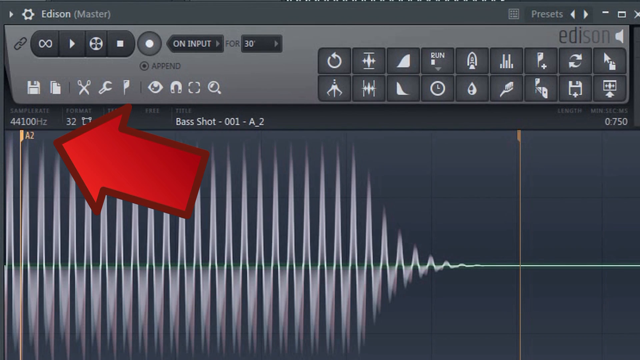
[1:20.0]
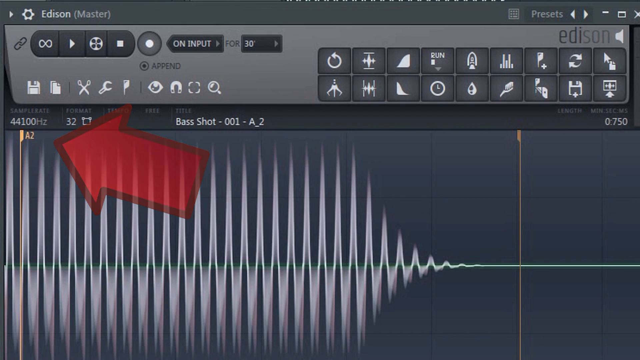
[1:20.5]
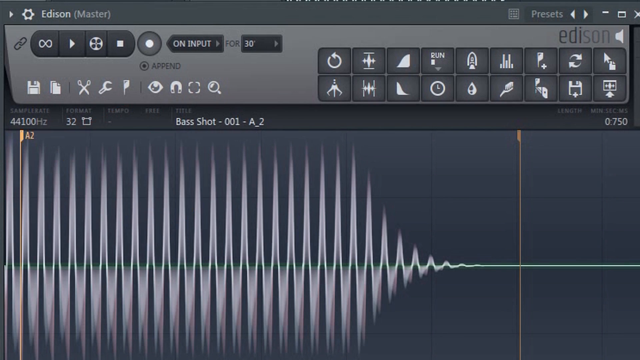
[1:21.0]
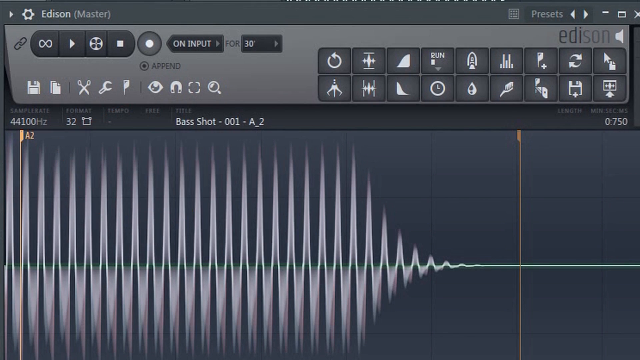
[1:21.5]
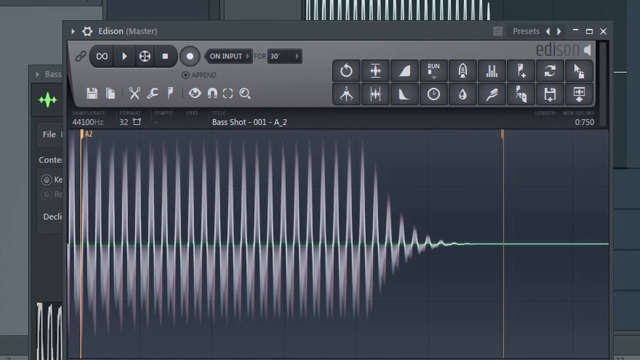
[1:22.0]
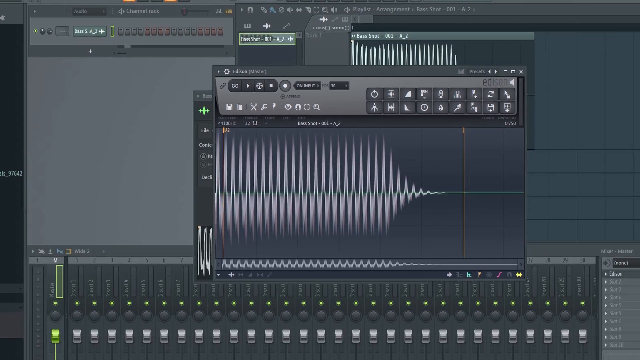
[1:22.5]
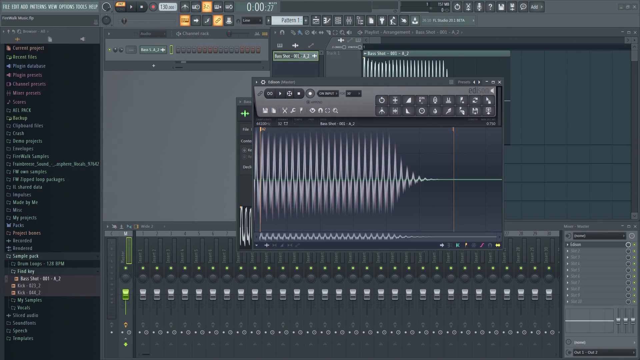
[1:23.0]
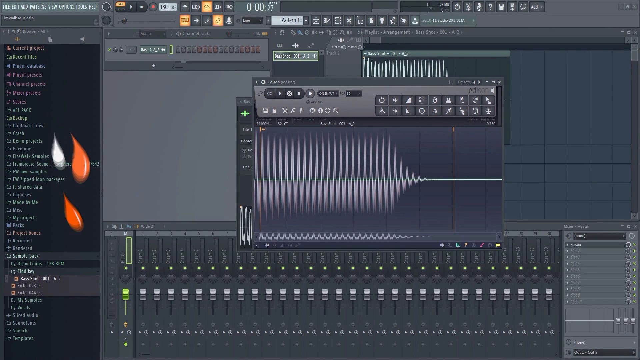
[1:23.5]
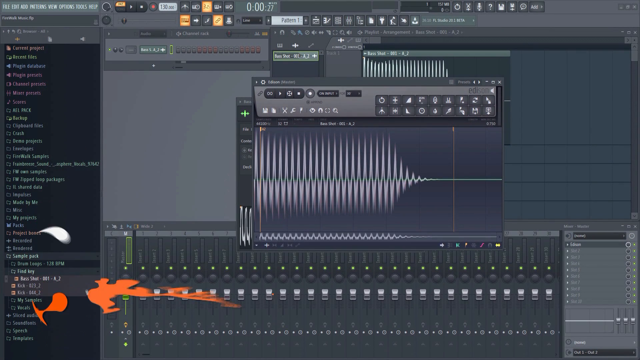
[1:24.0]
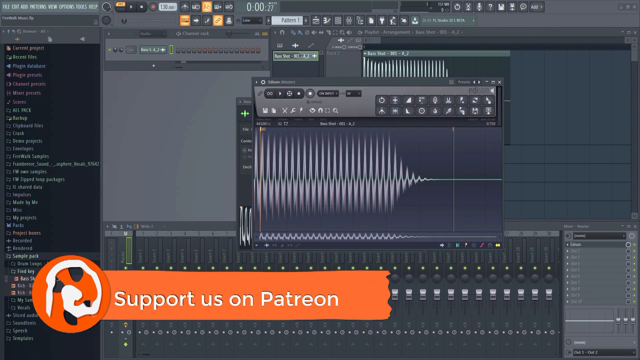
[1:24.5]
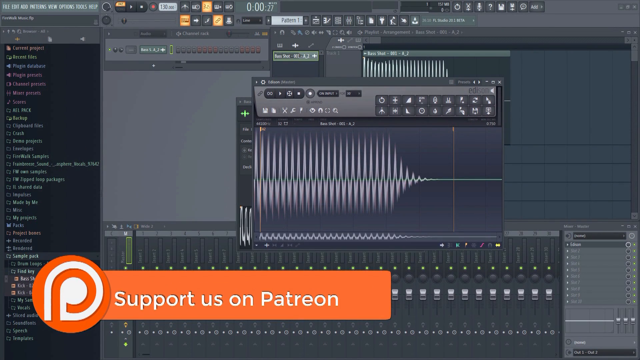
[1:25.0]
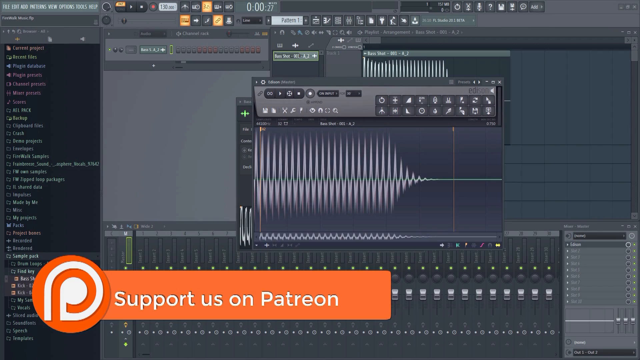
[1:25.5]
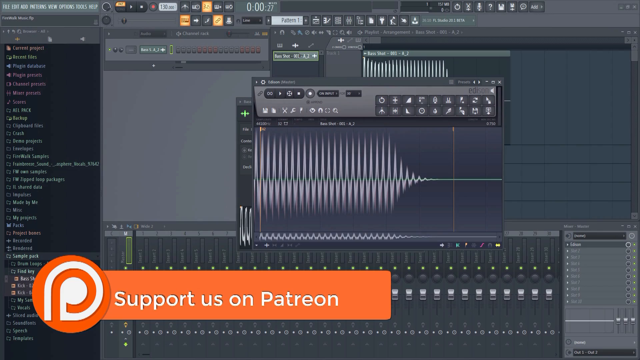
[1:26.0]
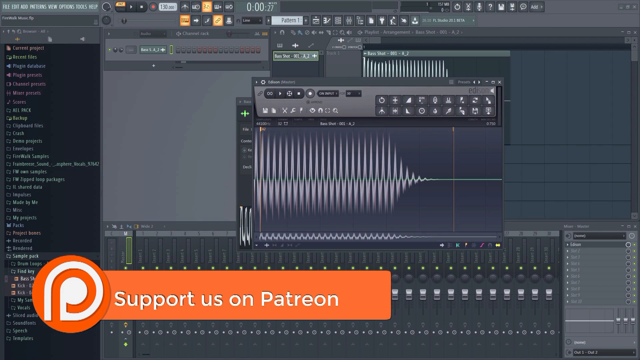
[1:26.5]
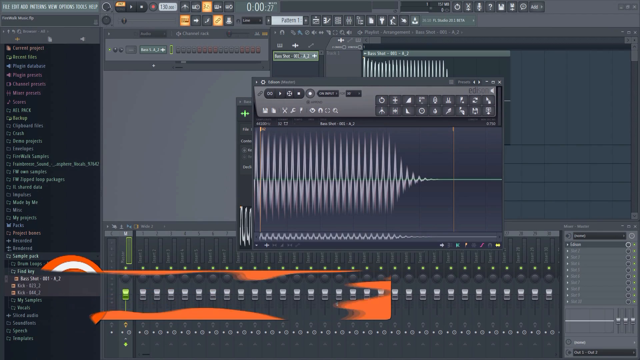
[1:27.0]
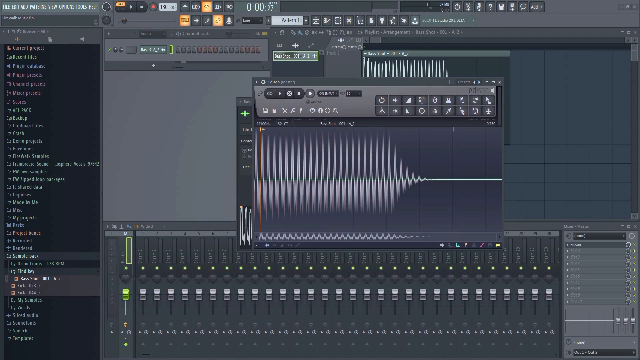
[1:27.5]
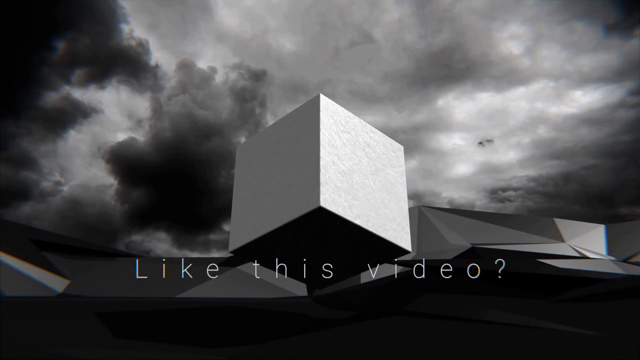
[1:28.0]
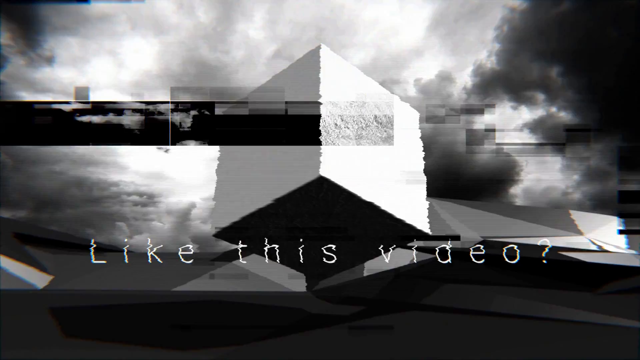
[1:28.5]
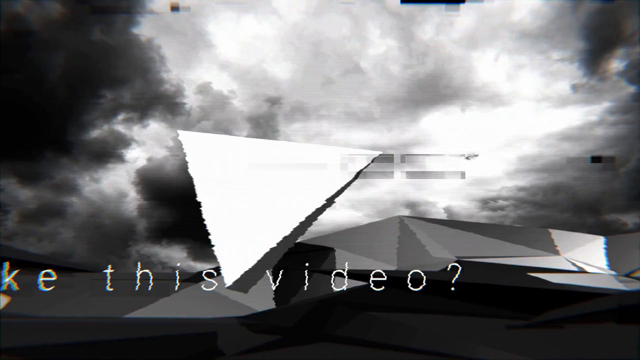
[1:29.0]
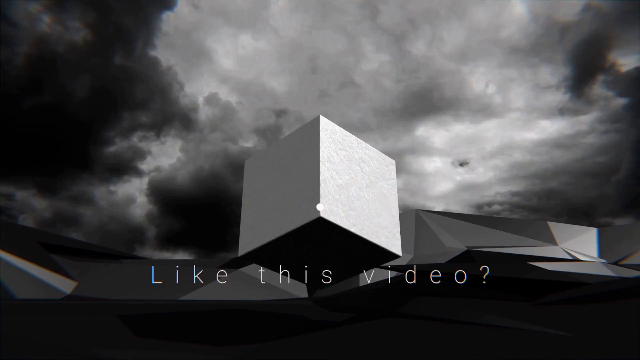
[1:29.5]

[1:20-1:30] A software program is shown with a waveform at the bottom of the screen. In the top left corner, white text reads "Edison Master" in parentheses, with a white gear-looking icon next to it and a little black chain-looking icon below. In the top right corner, gray text reads "presets," and below it, in two-tone color, "Edison." On the left side of the screen above the waveform is "44,100 hertz," with "Format 32" next to it. A title reads "Bass Shot" or "Bass Shot-001-A-2." A red arrow on the left side of the screen points at a peak in the waveform.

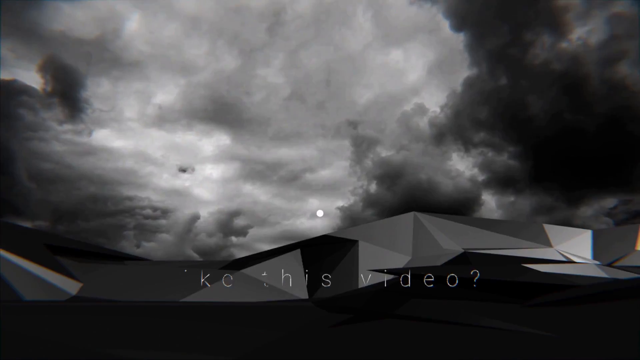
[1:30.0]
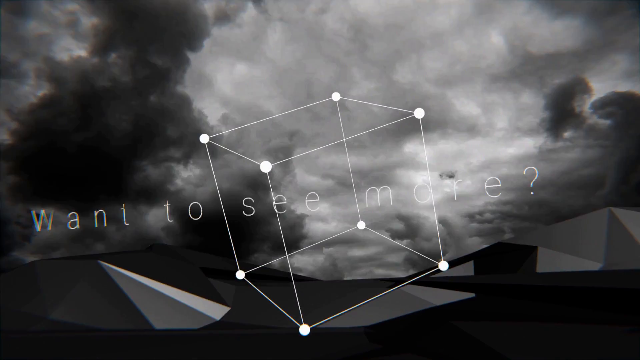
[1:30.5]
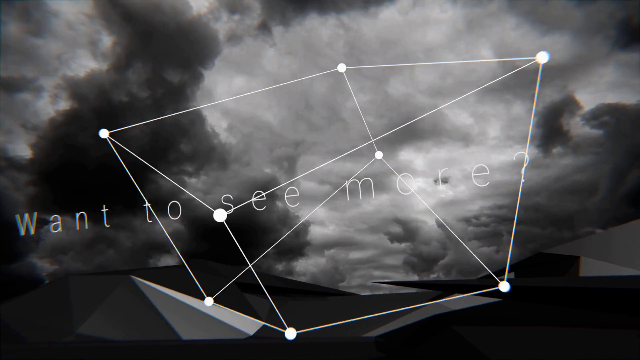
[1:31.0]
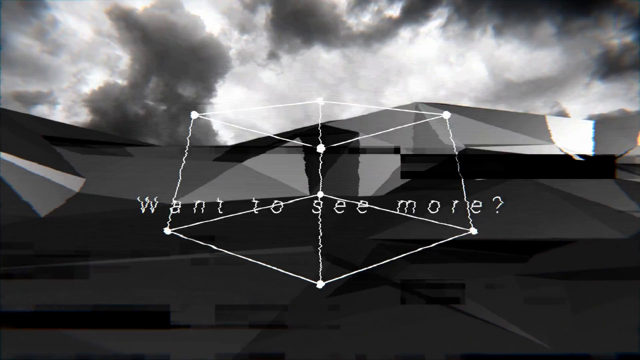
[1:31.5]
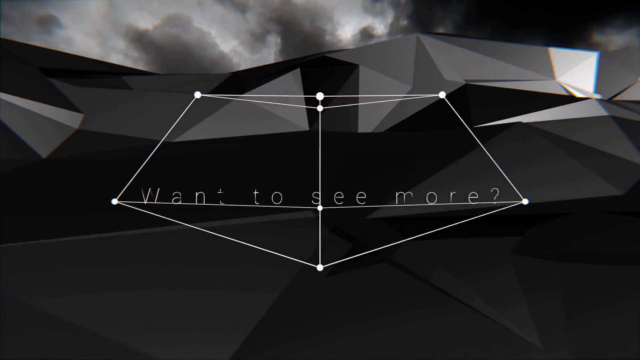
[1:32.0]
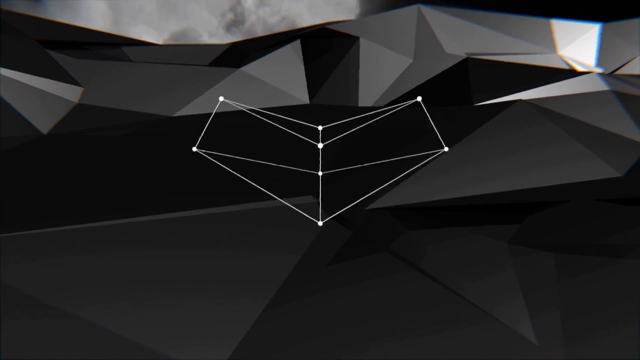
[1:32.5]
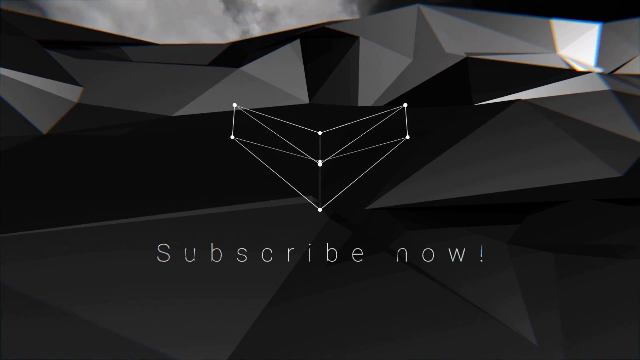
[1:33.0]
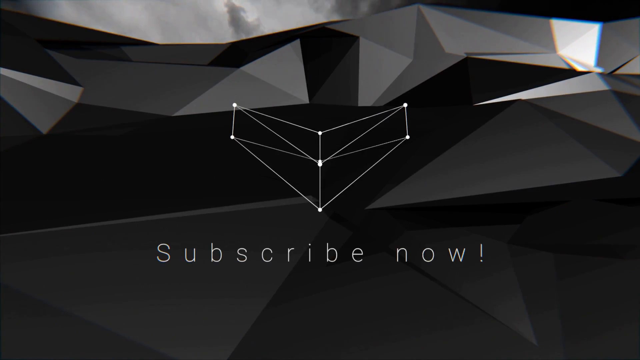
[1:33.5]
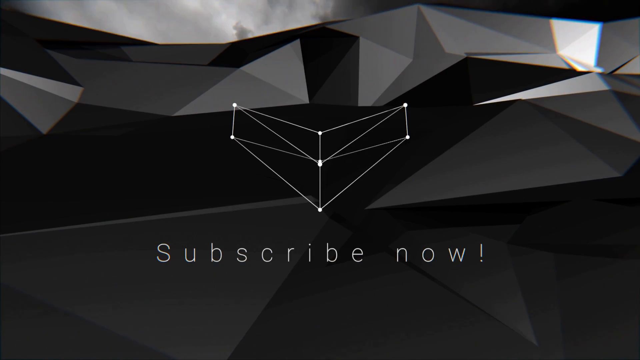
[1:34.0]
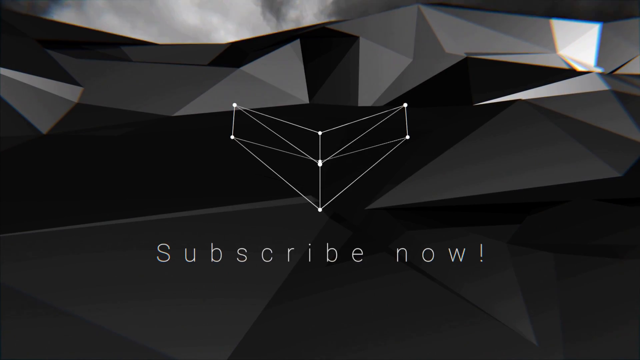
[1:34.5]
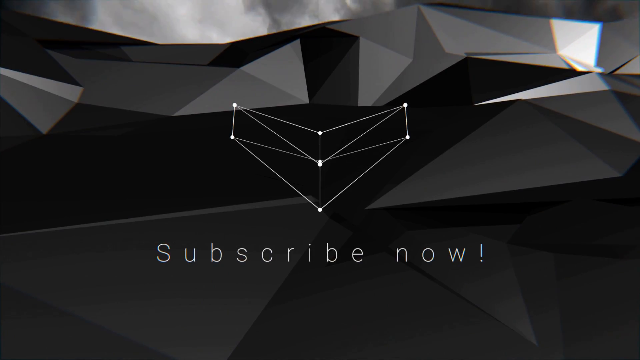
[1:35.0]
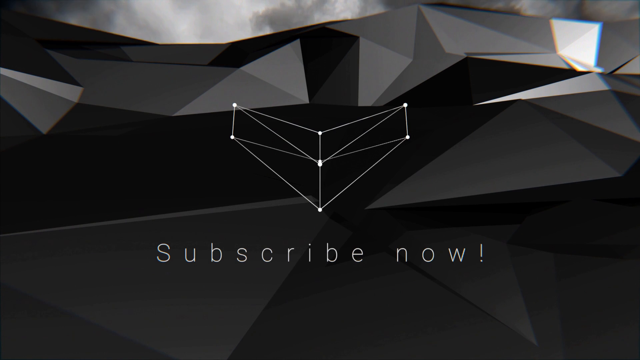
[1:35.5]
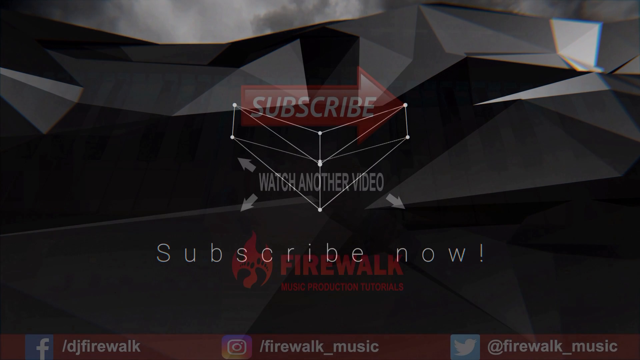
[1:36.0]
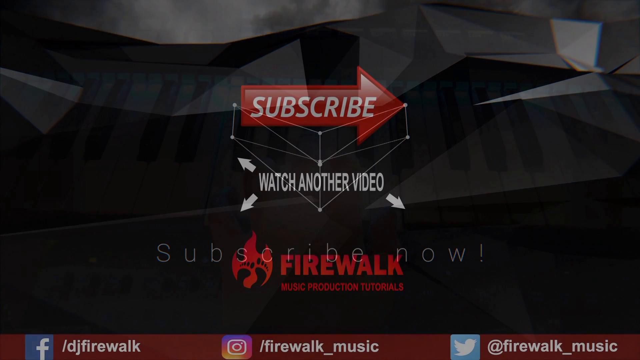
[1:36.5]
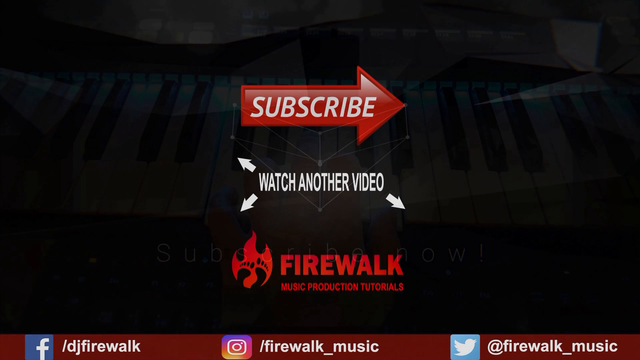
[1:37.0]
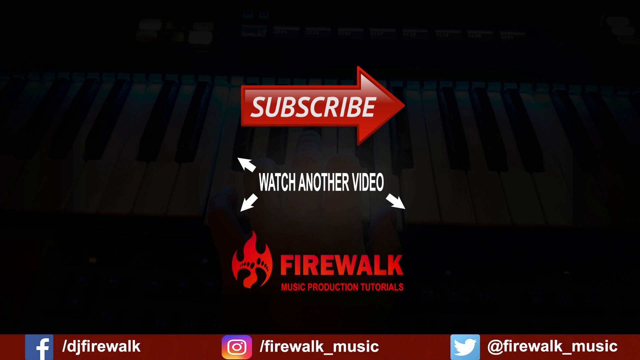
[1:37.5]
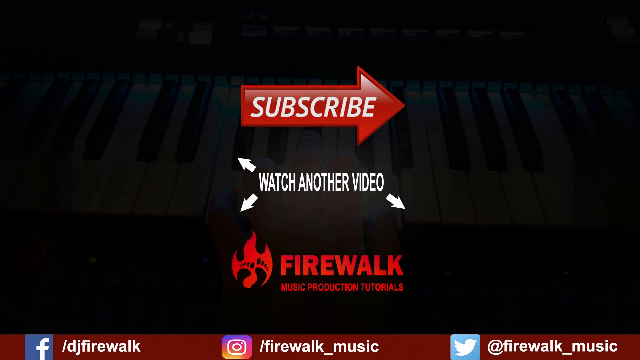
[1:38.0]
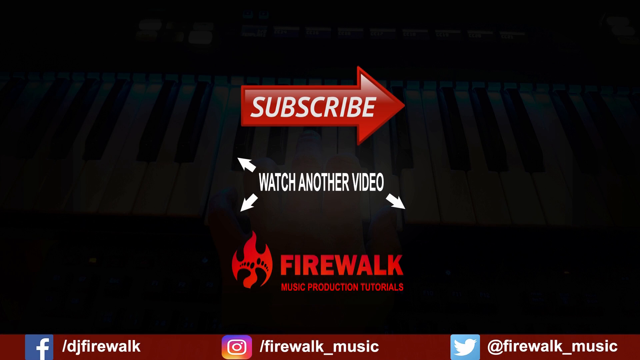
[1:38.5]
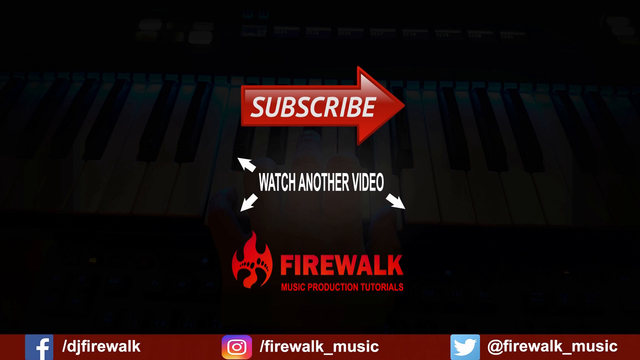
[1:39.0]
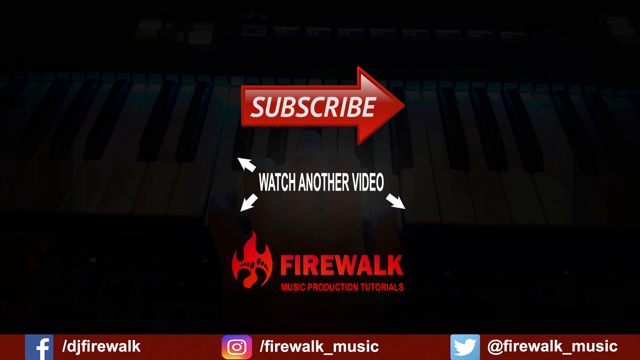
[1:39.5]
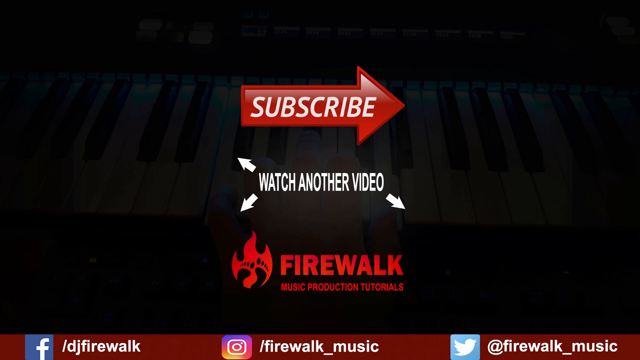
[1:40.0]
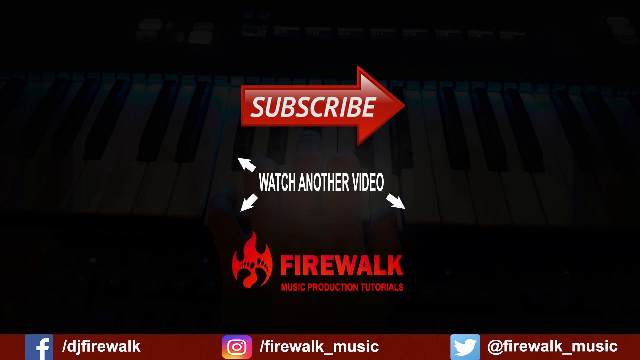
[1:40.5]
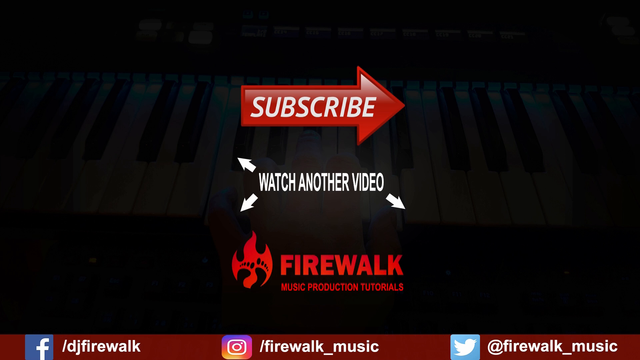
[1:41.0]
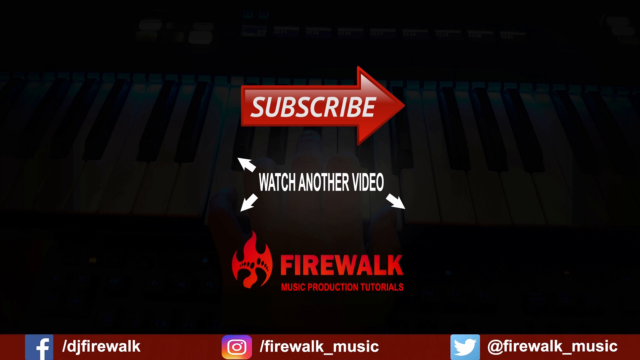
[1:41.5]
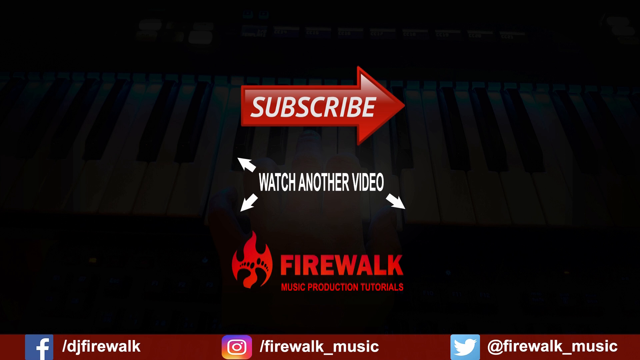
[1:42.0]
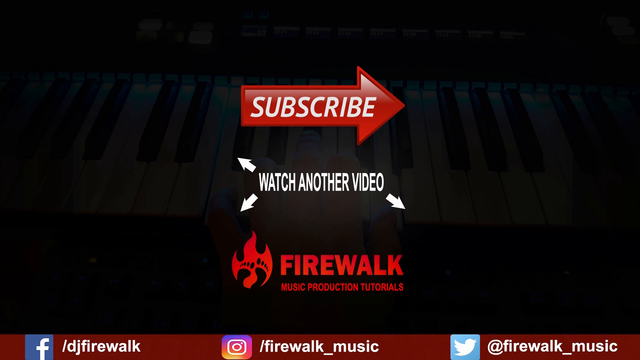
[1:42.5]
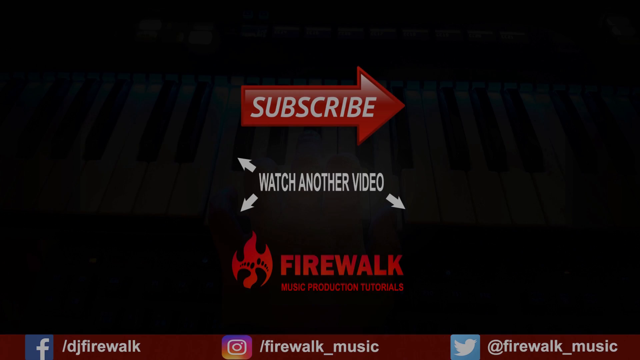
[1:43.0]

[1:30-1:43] A black-and-white video that looks almost like CGI appears. About three quarters of the screen, at the top, is taken up by a cloudy-looking sky with dark and light clouds. White text running slightly diagonally across the center of the screen reads "Want to see more?" A geometric-looking shape with lines and dots connecting the angles is in the center of the screen, and there are geometric shapes at the bottom of the screen too. The scene then changes to more geometric shapes on a flat plane, running kind of diagonally across the screen. In the center is another geometric shape, all white, with white lines connected by white dots, shaped somewhat like a vector. Below it, white text reads "Subscribe Now!" The scene then changes to a pitch-black background with "Please subscribe, watch another video, Firewalk music productions tutorials."